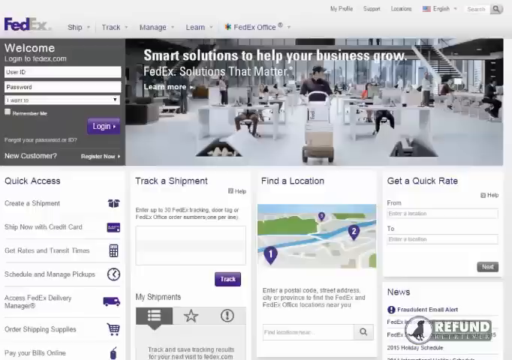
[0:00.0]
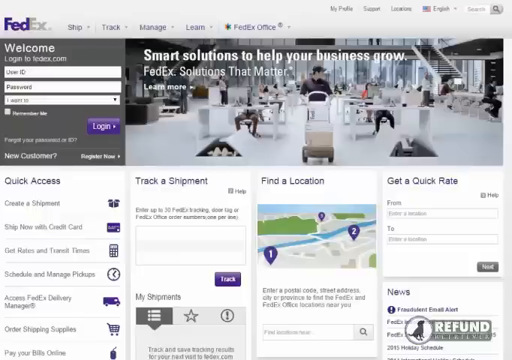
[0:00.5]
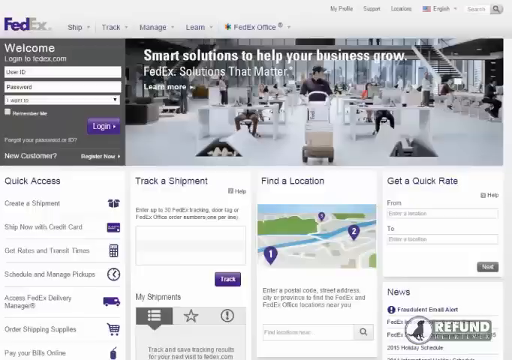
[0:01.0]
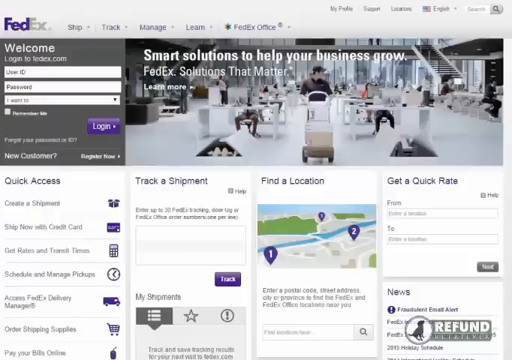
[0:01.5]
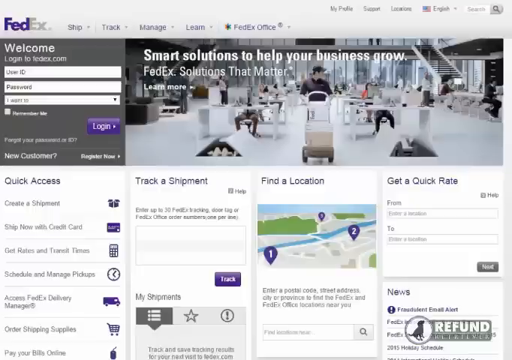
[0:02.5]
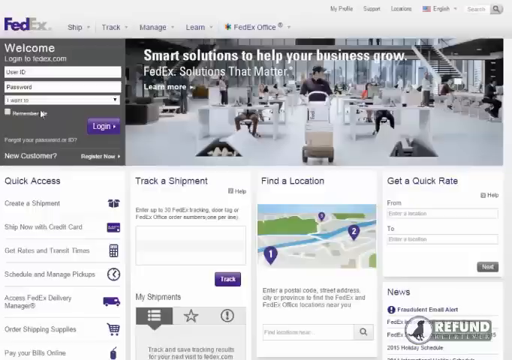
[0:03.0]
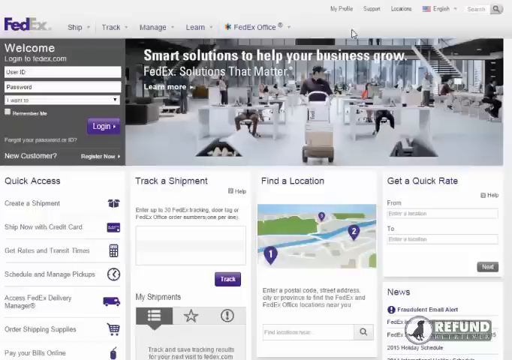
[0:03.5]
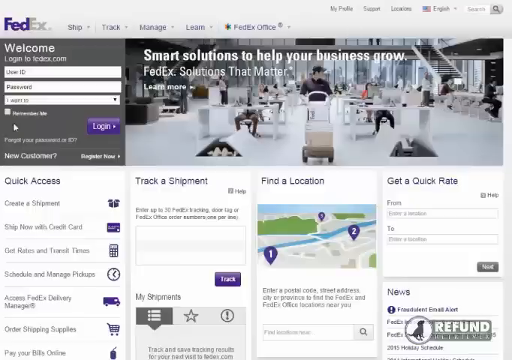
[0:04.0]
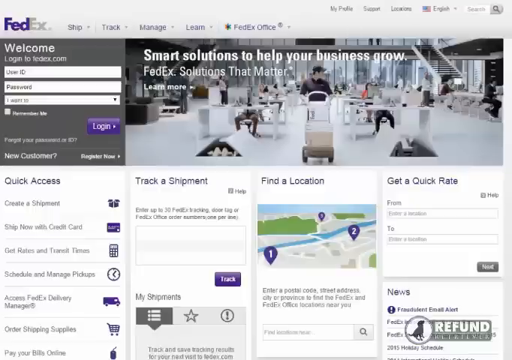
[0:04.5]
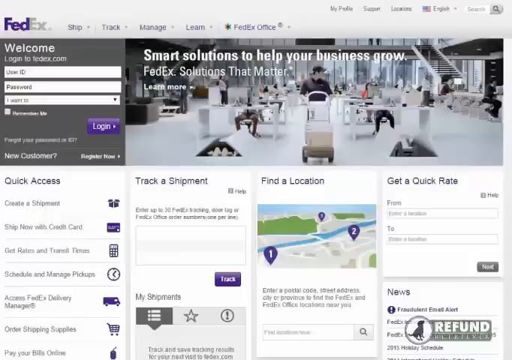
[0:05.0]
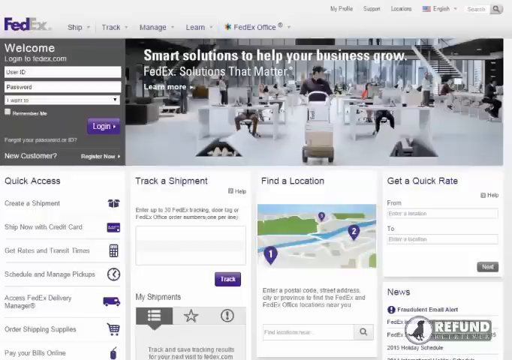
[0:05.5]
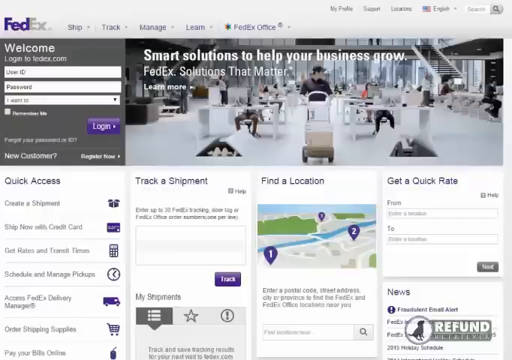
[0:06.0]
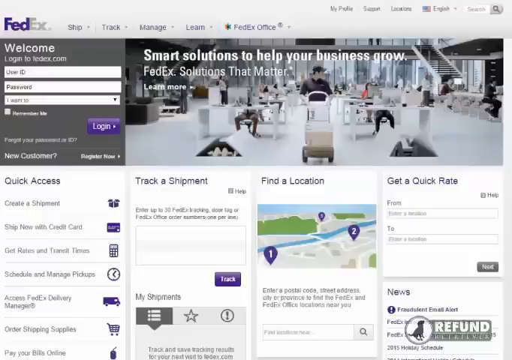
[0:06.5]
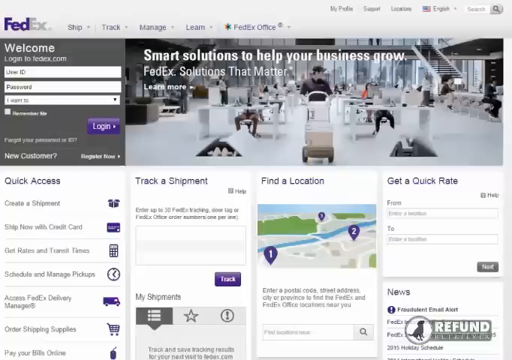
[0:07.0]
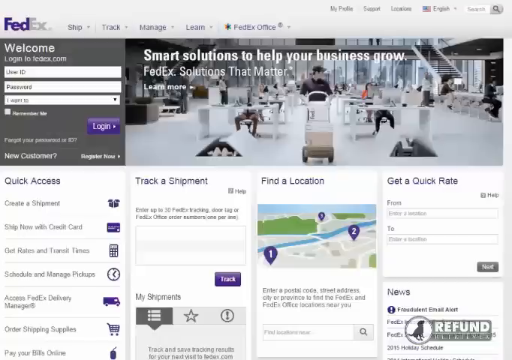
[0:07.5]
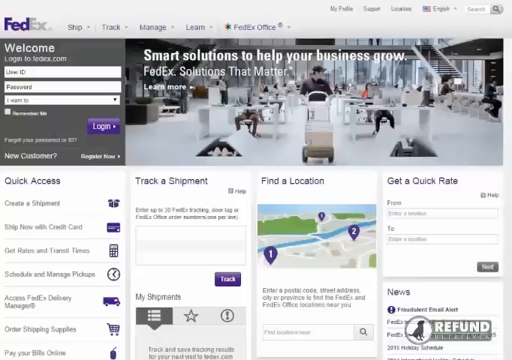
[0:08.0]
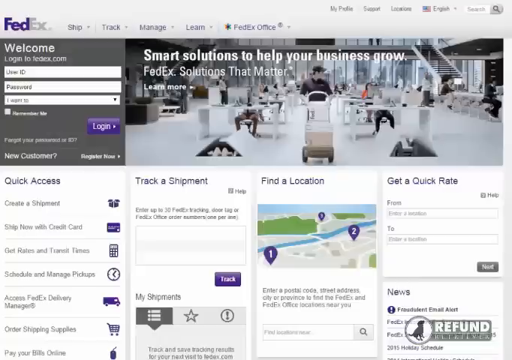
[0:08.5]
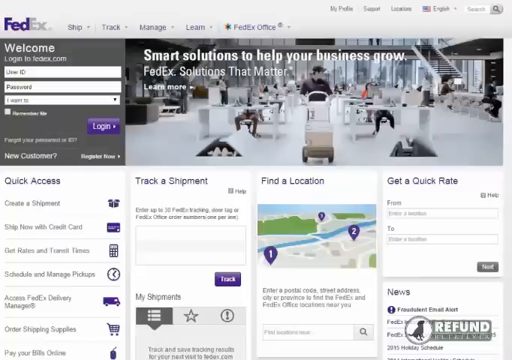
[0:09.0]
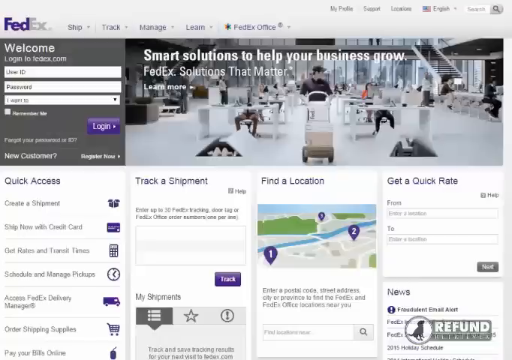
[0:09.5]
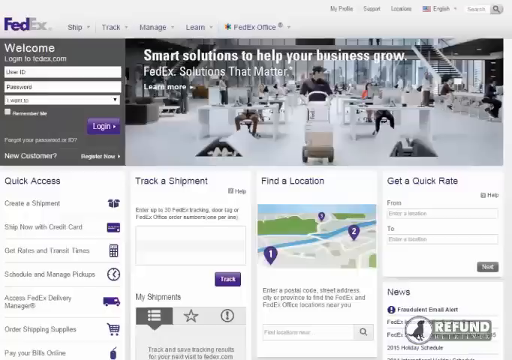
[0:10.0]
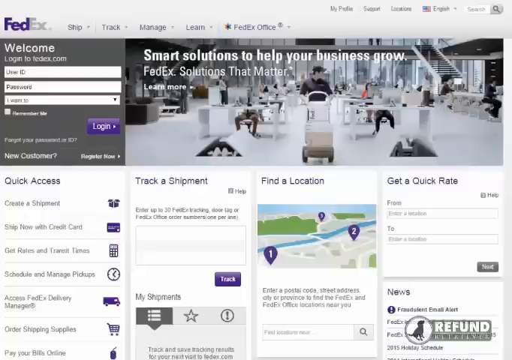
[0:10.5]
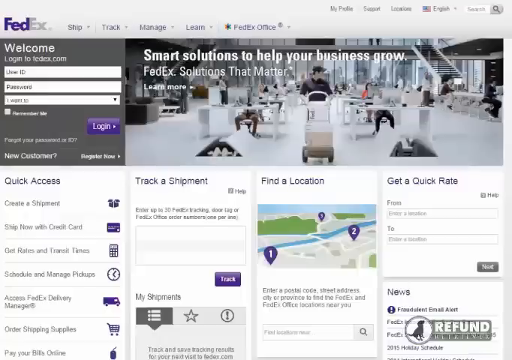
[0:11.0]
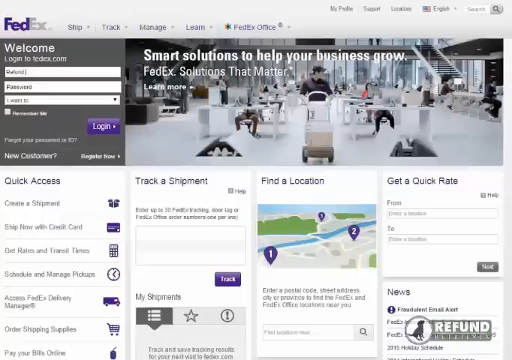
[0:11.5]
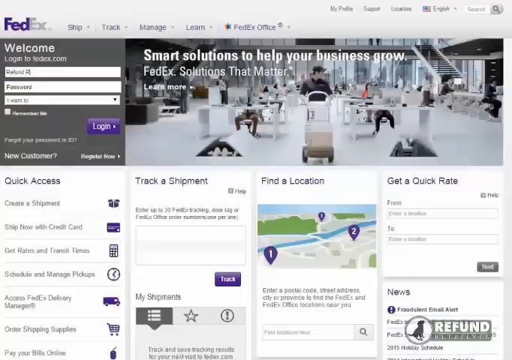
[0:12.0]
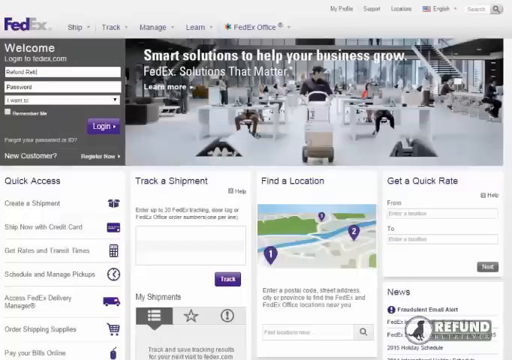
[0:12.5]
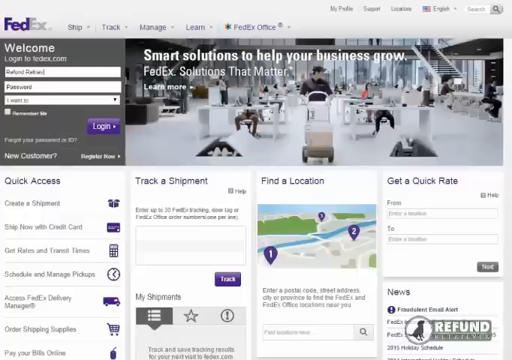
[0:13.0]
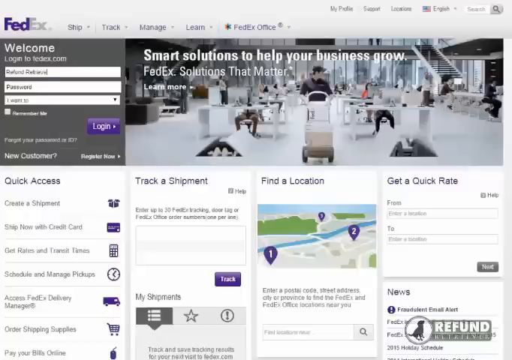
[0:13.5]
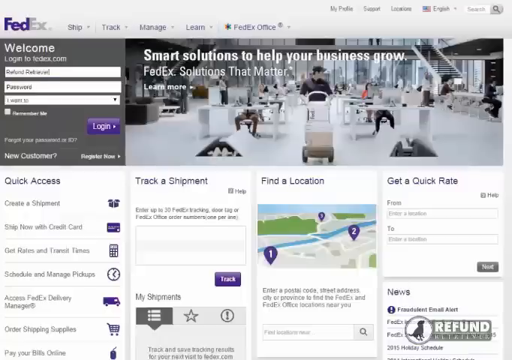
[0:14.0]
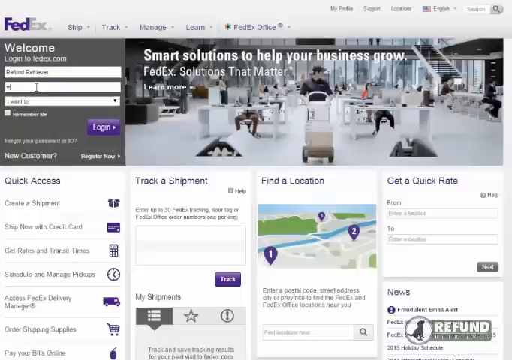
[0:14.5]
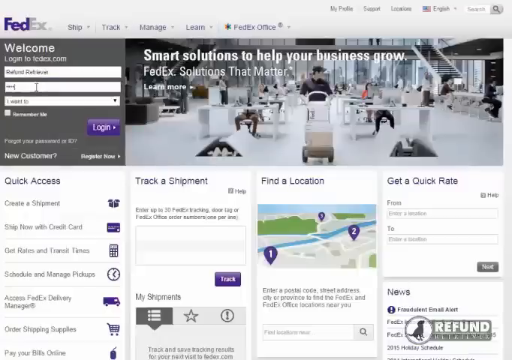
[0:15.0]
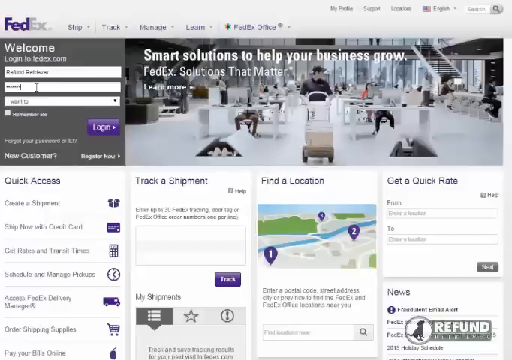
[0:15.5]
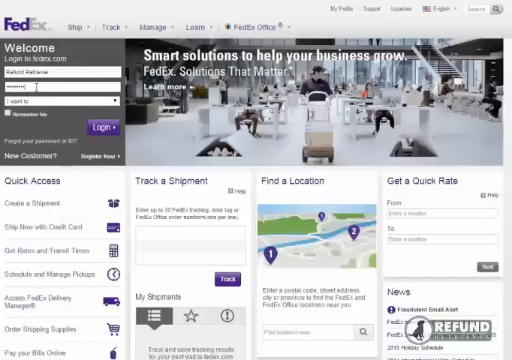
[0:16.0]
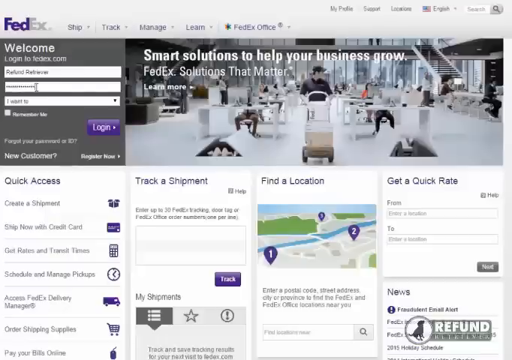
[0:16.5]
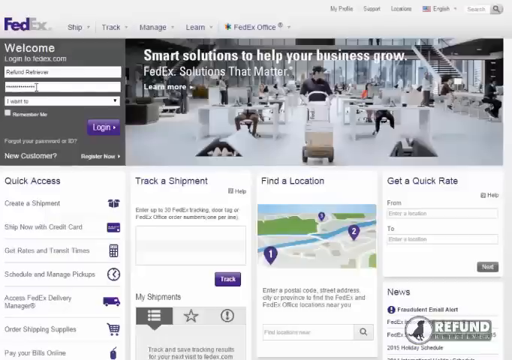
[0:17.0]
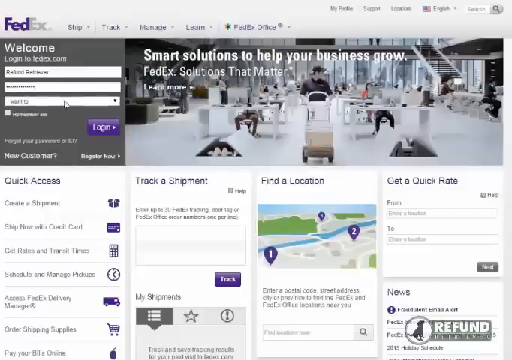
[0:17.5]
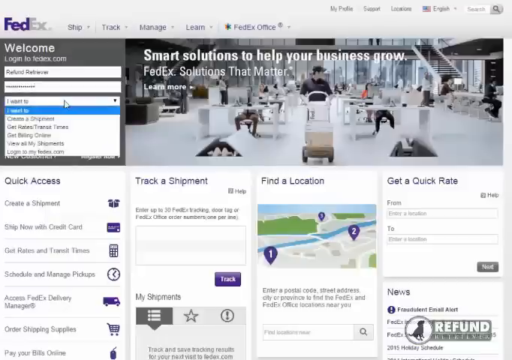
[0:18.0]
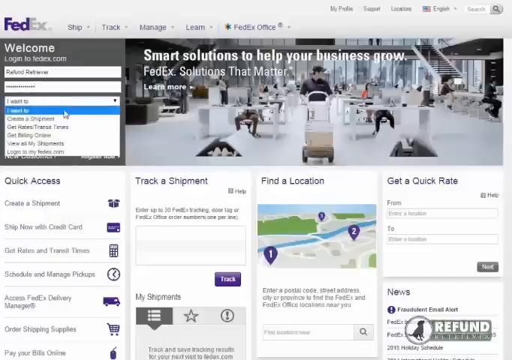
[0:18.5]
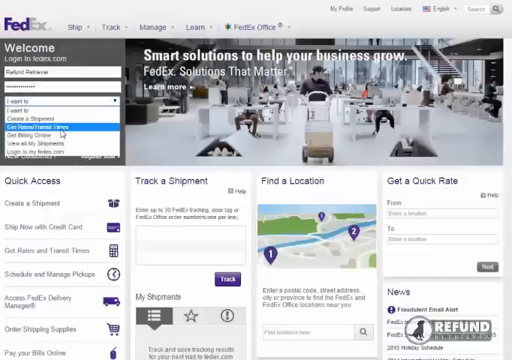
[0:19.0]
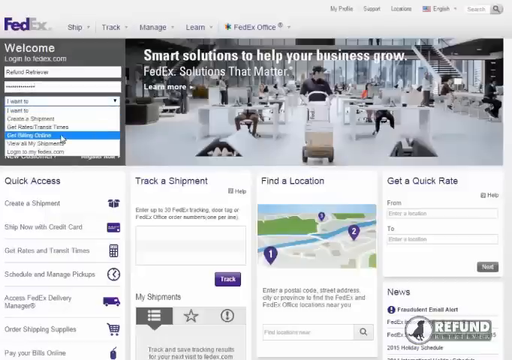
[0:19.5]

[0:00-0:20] The FedEx website is open. A header at the top says "invite tech smart solutions to help your business grow." On the top left side of the screen is a login area with a purple button that says "login" in white text. In the middle of the page are four sections, also in purple text, that say "quick access," "track a shipment," "find a location," and "get a quick rate." The user types in their login information and then enters their password. Underneath the password is a drop-down menu; when it is clicked, a lot of options pop up. The cursor hovers over one of the options, which is highlighted in blue, and after it is selected the drop-down menu disappears.